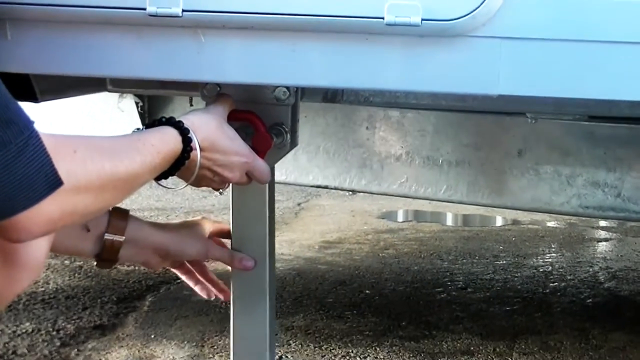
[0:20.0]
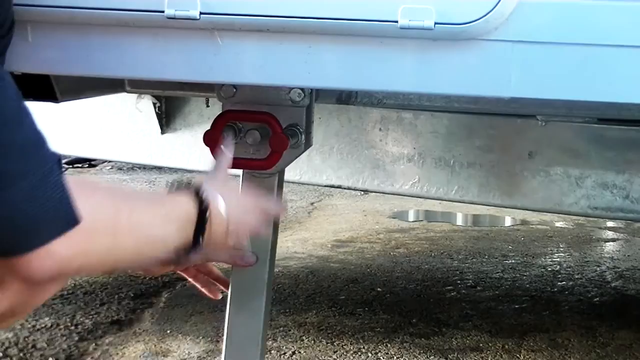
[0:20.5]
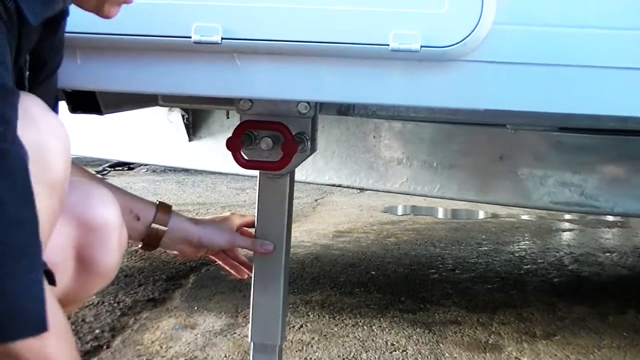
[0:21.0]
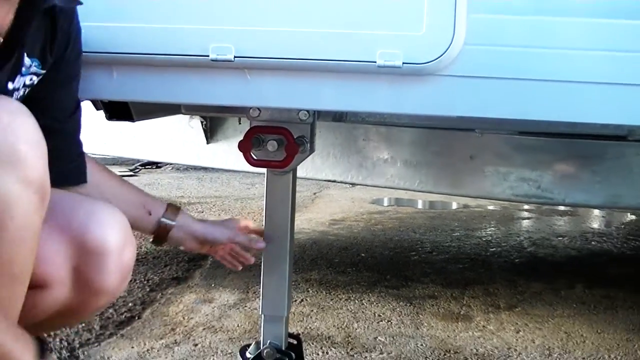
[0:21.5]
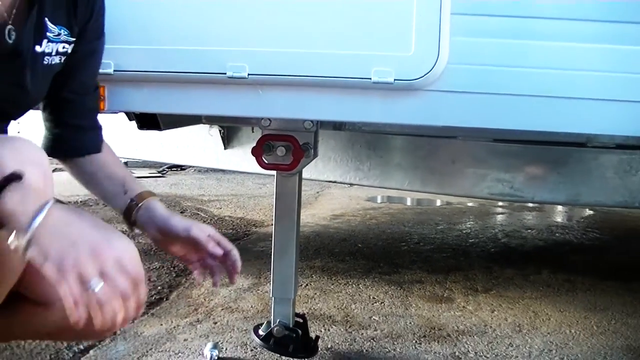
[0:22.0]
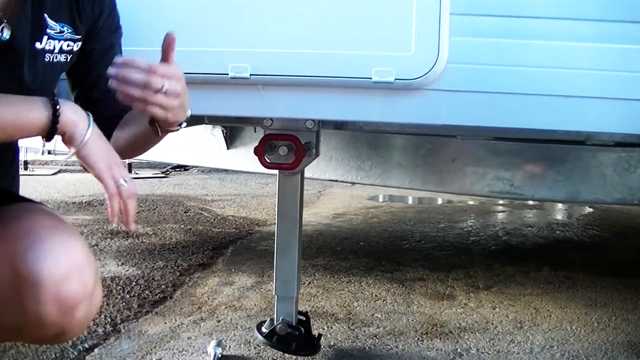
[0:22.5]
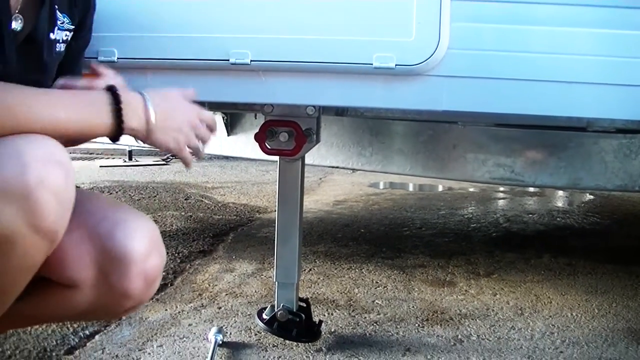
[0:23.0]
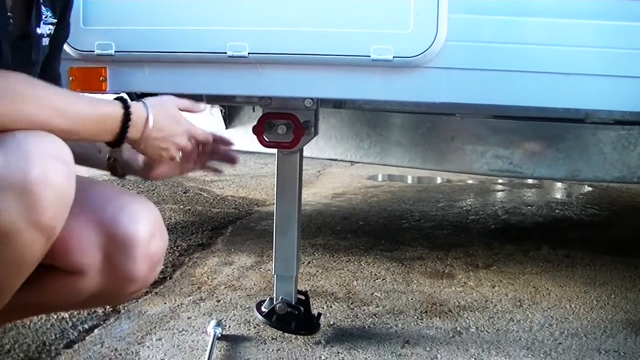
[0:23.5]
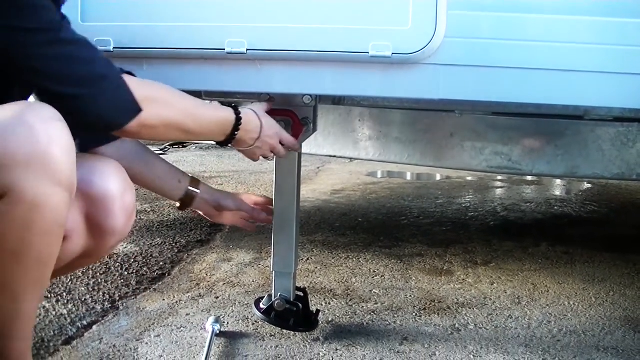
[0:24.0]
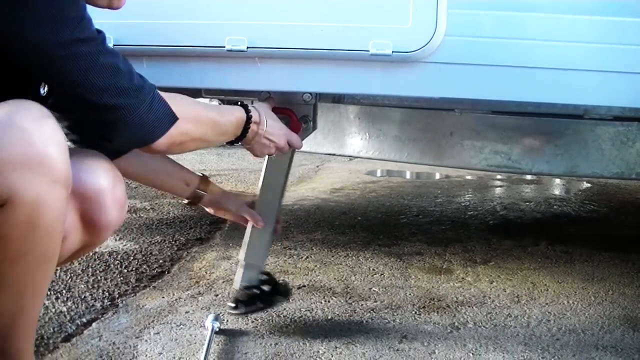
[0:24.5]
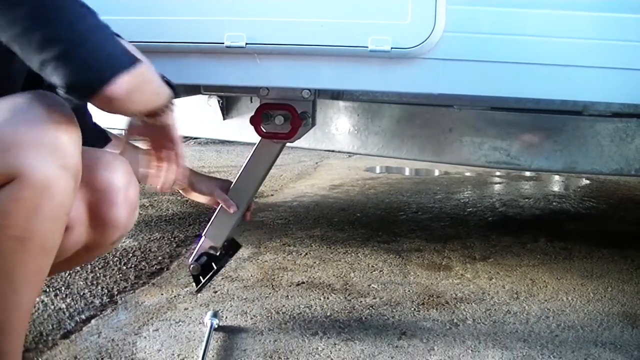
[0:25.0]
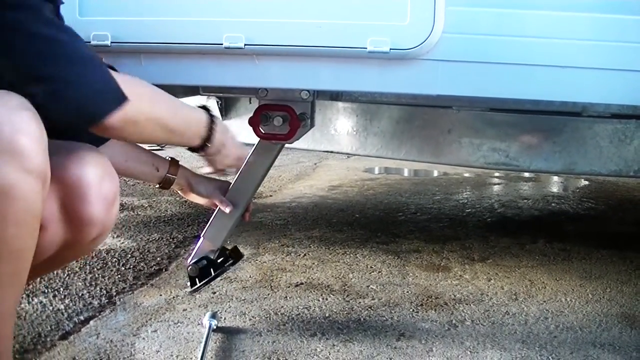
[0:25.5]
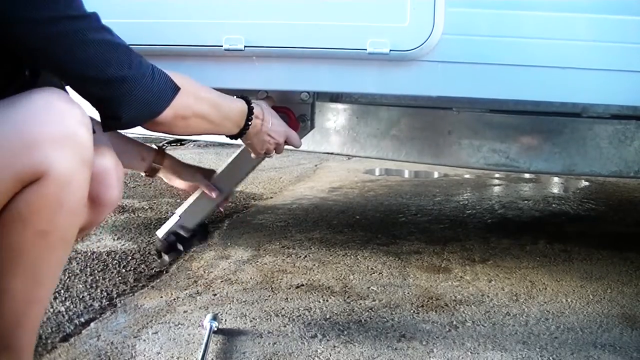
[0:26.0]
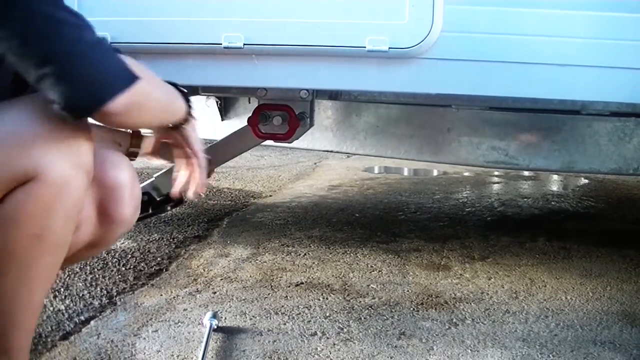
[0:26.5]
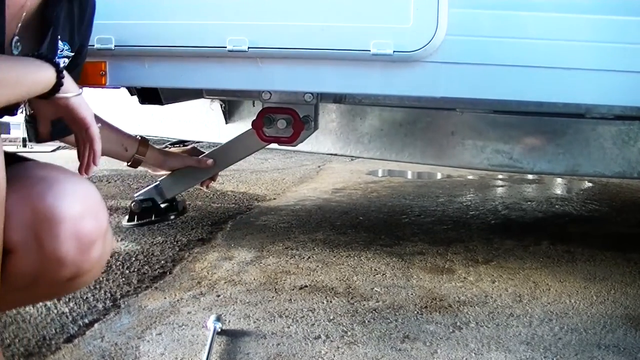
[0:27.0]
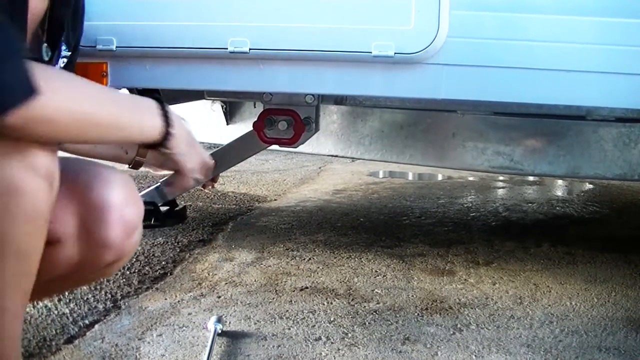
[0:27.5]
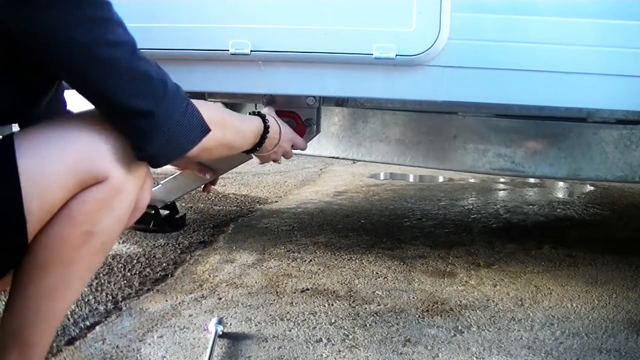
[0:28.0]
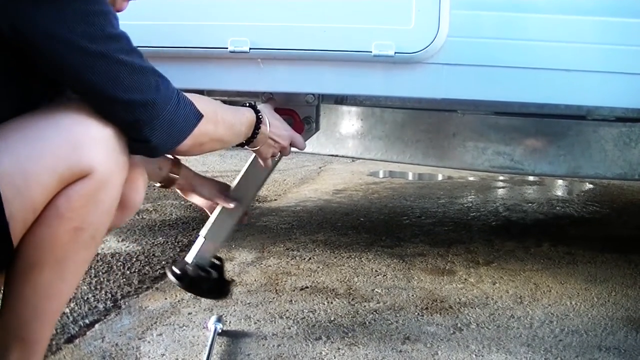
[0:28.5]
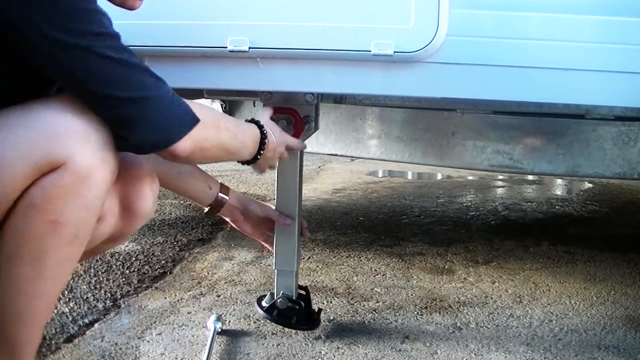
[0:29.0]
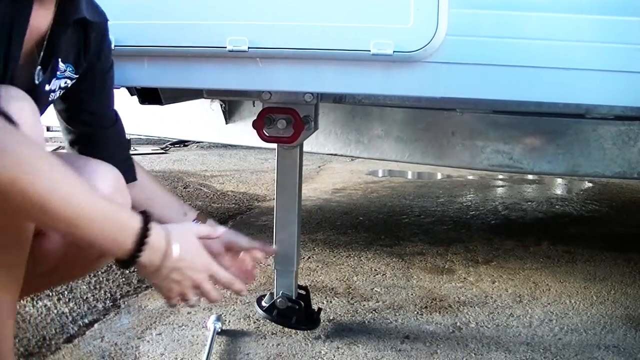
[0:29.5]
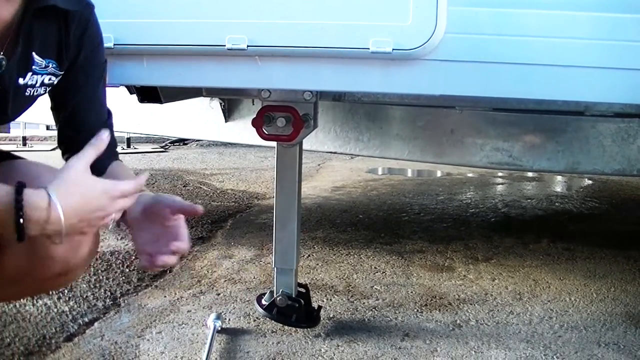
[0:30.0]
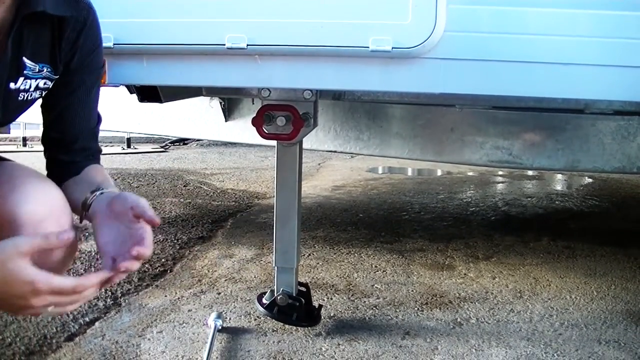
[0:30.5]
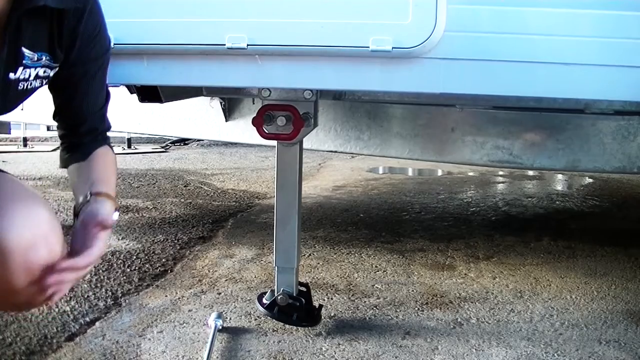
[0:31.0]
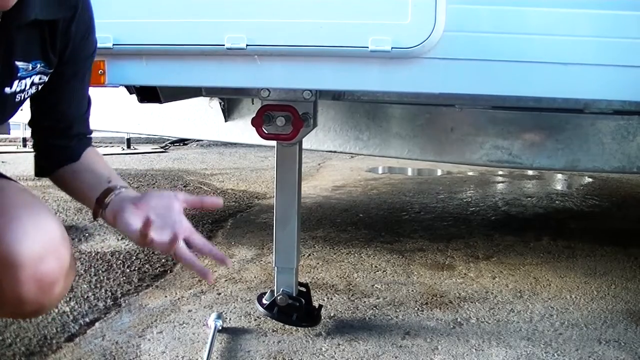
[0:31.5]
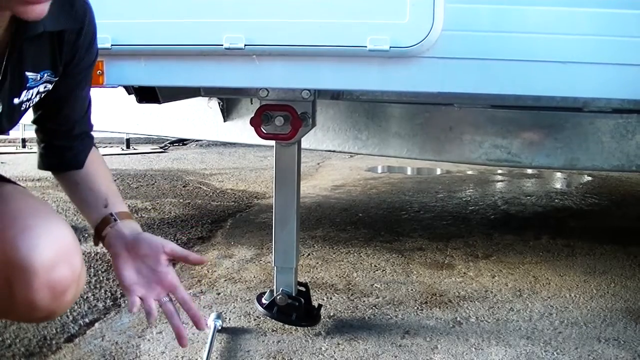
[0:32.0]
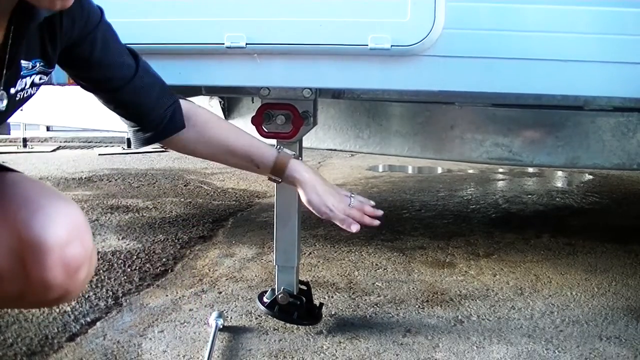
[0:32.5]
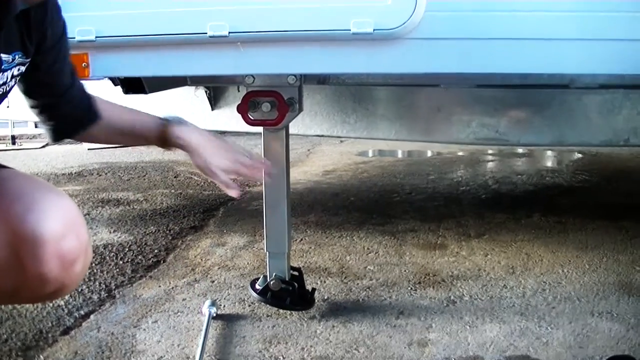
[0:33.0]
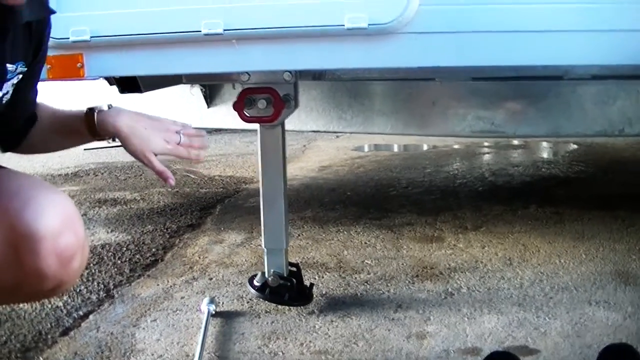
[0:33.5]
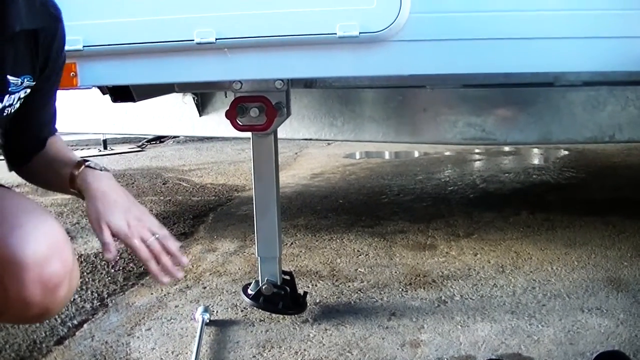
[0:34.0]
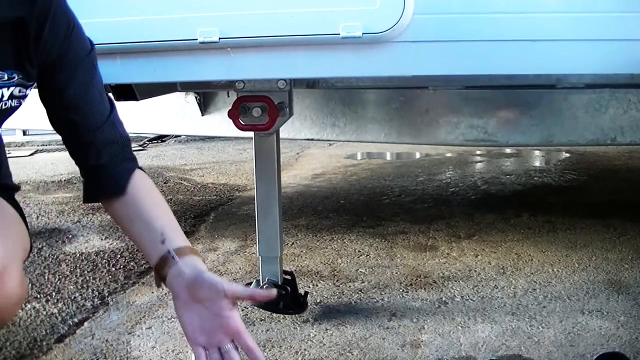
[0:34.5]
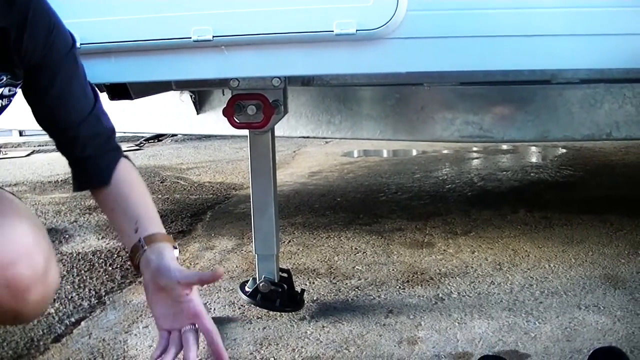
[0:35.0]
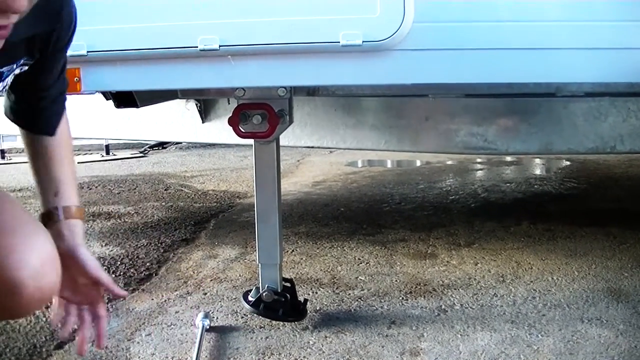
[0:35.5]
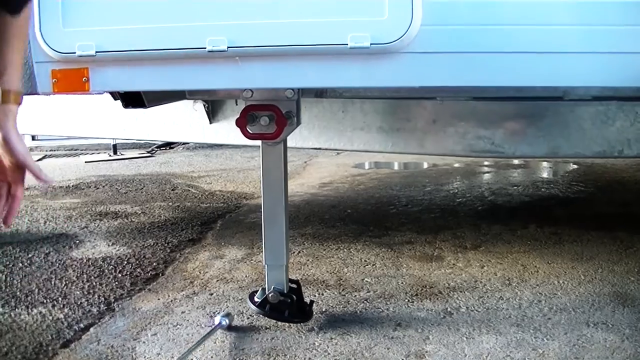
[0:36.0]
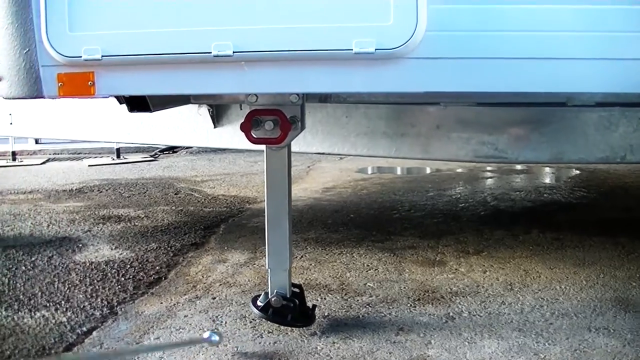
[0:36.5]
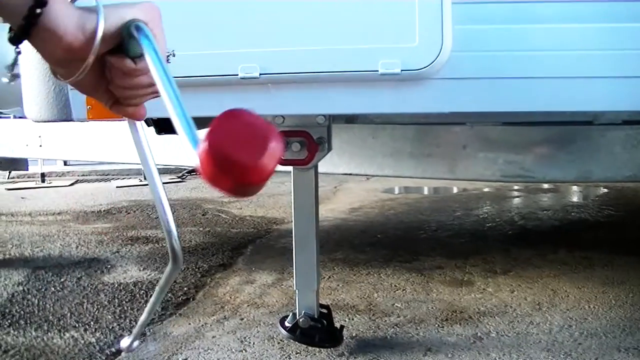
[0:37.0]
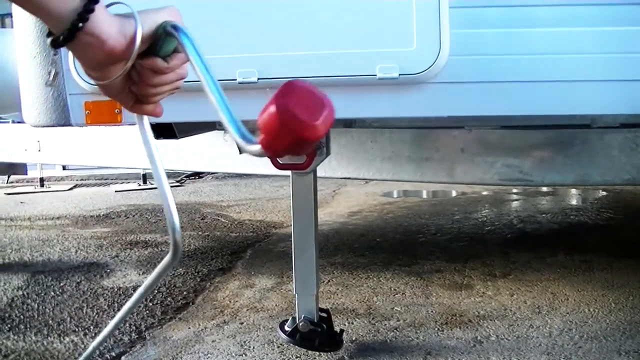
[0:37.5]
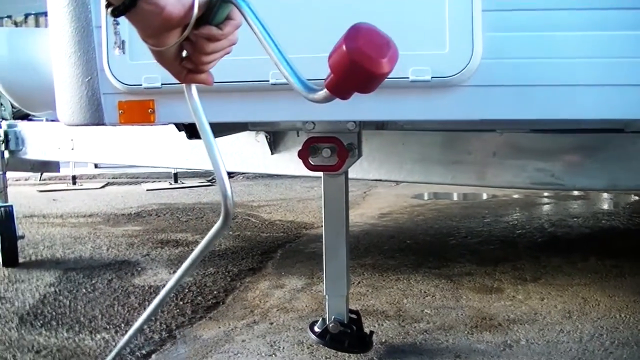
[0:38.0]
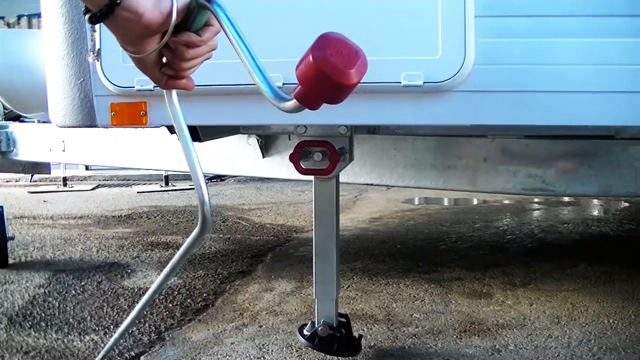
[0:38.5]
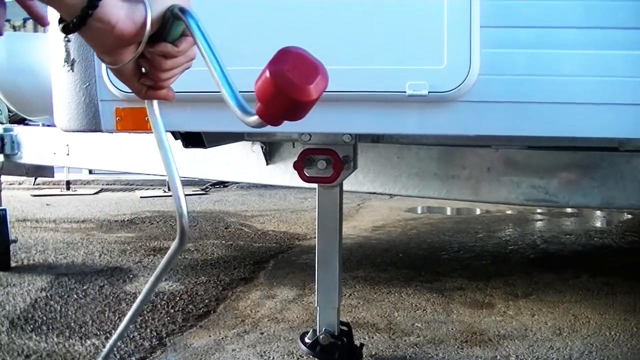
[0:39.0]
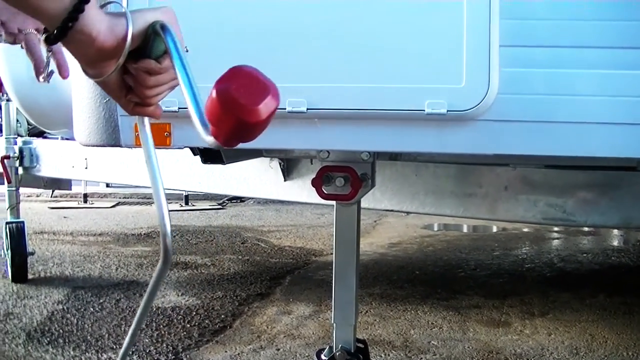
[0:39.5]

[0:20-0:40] As the person brings the middle piece down, their left hand holds on to it, thumb on the front and fingers behind it, while the other hand goes down. They are now squatting, and as the camera pans out a little more their knees are visible, kind of pointing to the right and up near their chest. They turn toward the camera and move a hand away, then, with fingers toward the camera, raise it up while the other hand, coming in from the left, kind of hangs there. They kind of roll their hands over each other and wipe them together to get some of the dirt off, then reach back under. The right hand grabs the red circle and the left grabs the left side of the leg coming down, pulling it a little to the left. Underneath the leg a little black circle is hooked into it to make it more stable when it is on the ground; it is kind of just dangling there. The right hand comes back to the knee, elbow on the knee, while the other hand holds on. The hand reaches and grabs the red again and pulls the leg up a little farther on the left side, then moves back so the forearm is on the knee, and they reach in and pull the circle again. The leg is now going straight up and down as they bring their hands back to their knees. They kind of wipe their hands on their knees, turn toward the camera and point under the vehicle, then bring their hand back. From the left corner they bring in a long silver piece that goes up about three feet and then angles up a foot to the right; their hand is on the top part. It then goes down to a big, circular red handle at the end to crank it with.